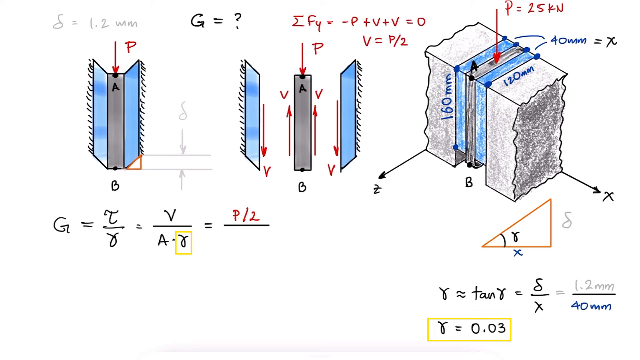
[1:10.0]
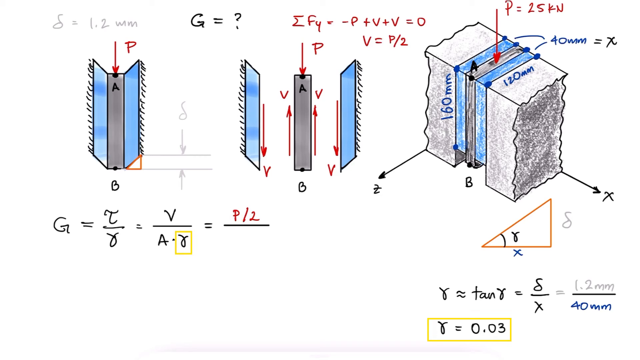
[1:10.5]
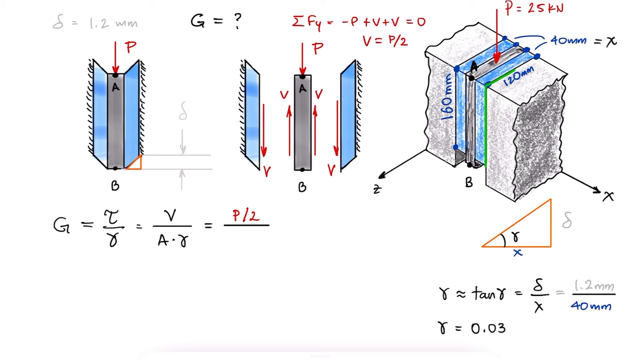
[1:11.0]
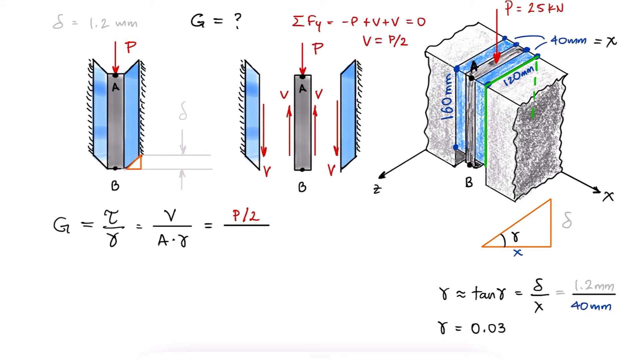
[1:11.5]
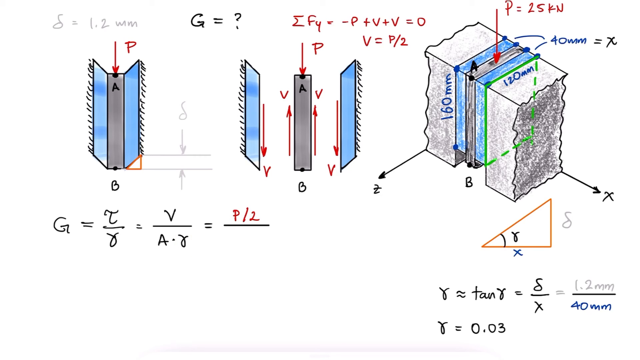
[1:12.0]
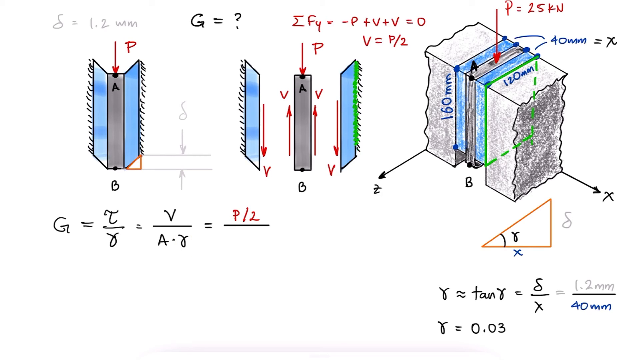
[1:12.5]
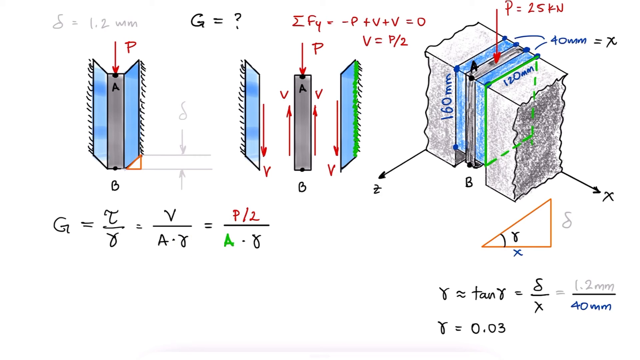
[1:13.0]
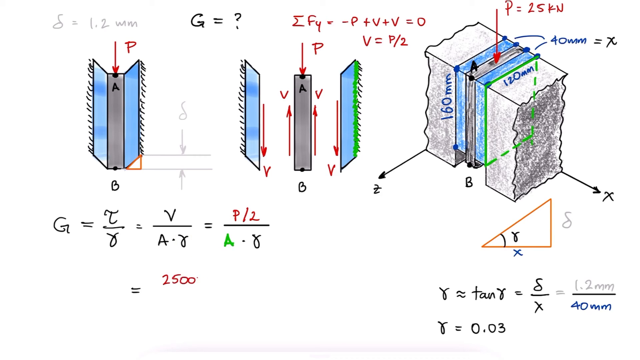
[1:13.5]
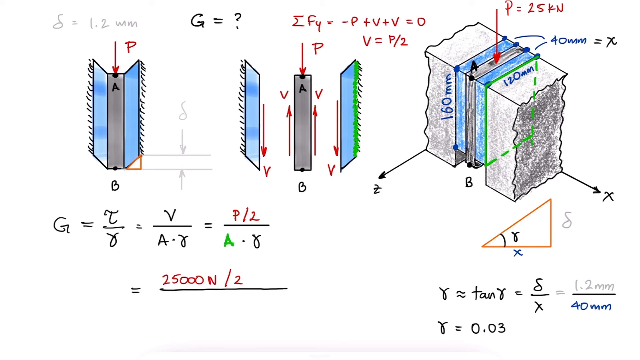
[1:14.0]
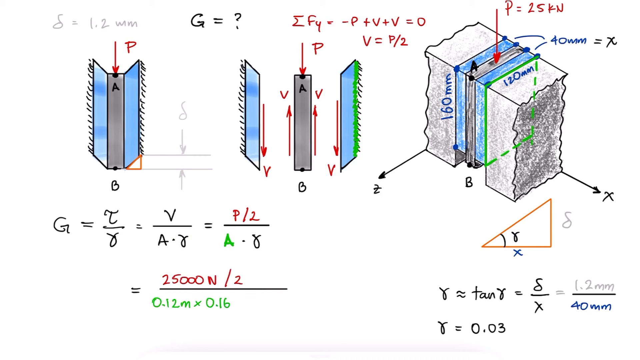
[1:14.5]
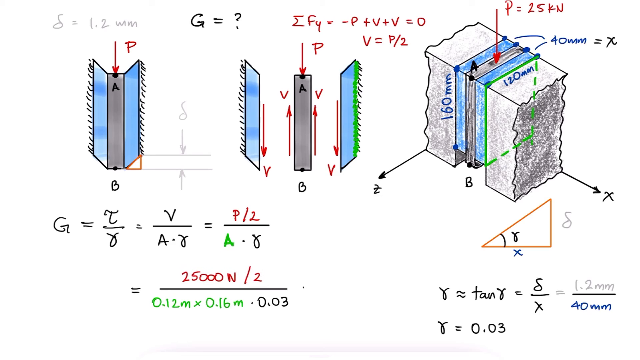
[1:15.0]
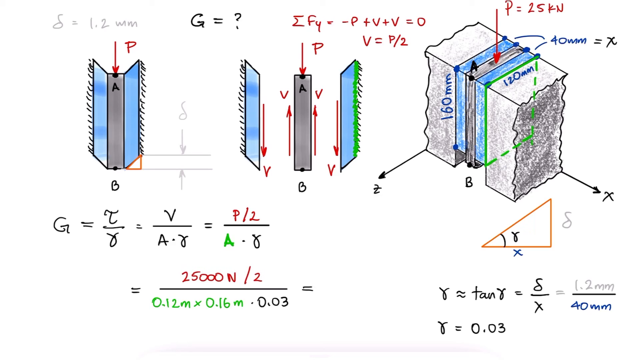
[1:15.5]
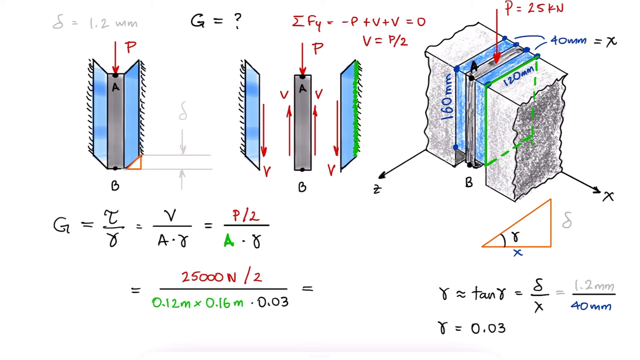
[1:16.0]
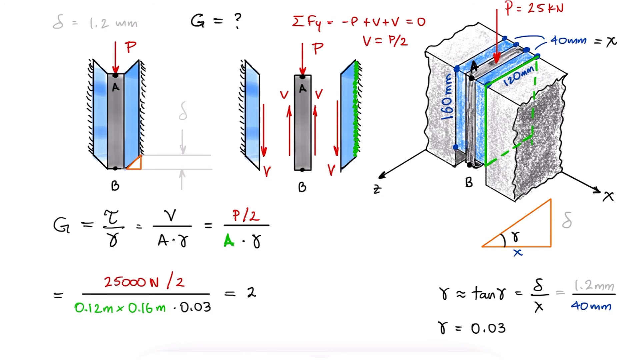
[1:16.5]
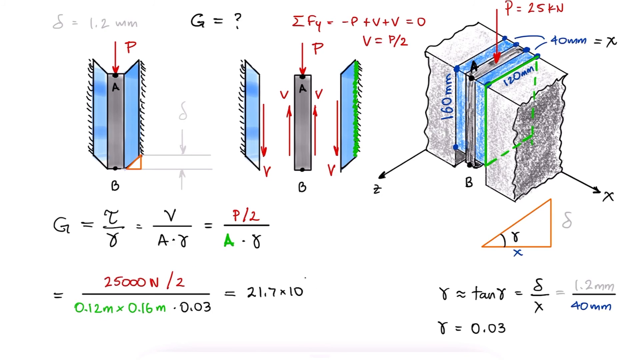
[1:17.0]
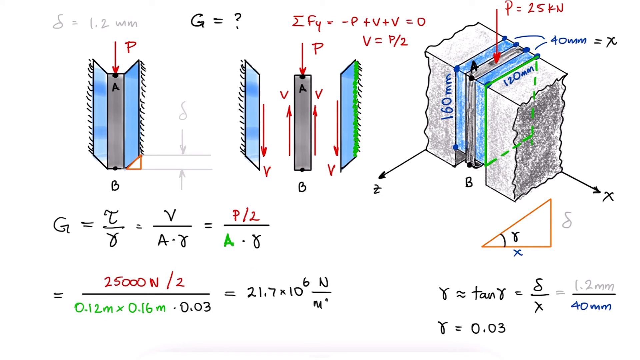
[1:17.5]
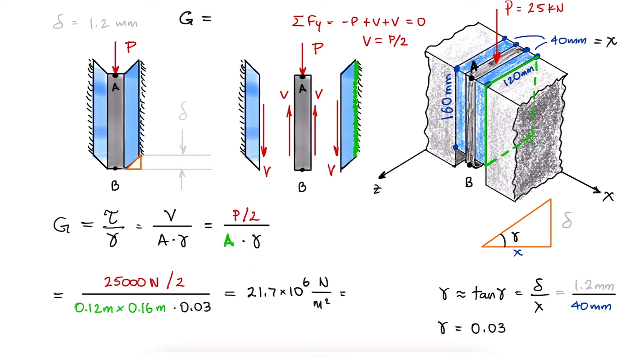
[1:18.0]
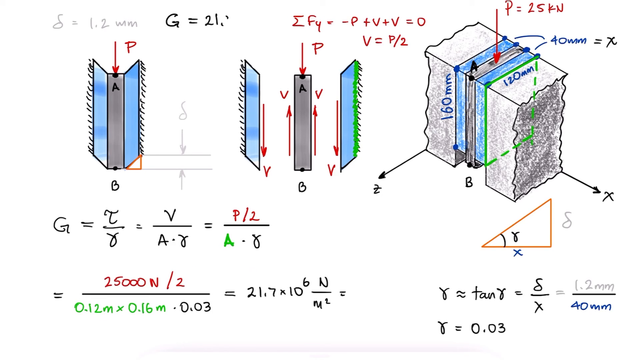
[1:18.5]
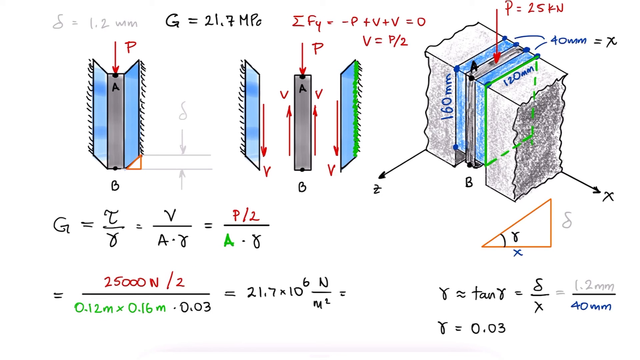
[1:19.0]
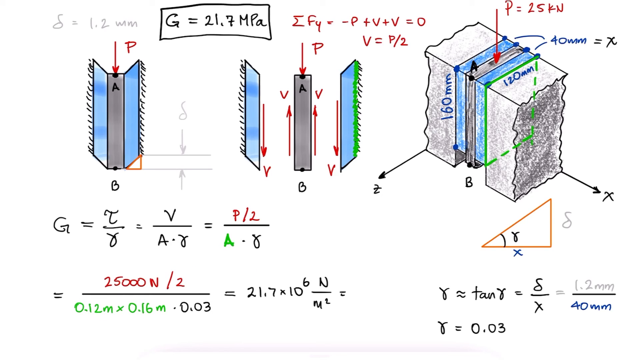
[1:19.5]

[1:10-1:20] Three sketches are shown, and the first sketch, where B and A are found, is now broken into three parts. Above the sketch is a formula for finding the value of P, which is carried into the formula needed to find the value of G. Points on the first sketch are highlighted in green, and the view of that point is shown in the second sketch, which is broken into three parts. A calculation is written: 2500 N over 2 over 0.12 meters times 0.16 meters times 0.02 equals 27.1 times 10 to the power of 6 N per square meter, which equals G.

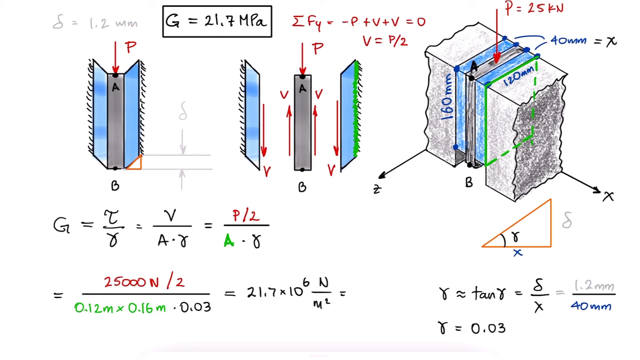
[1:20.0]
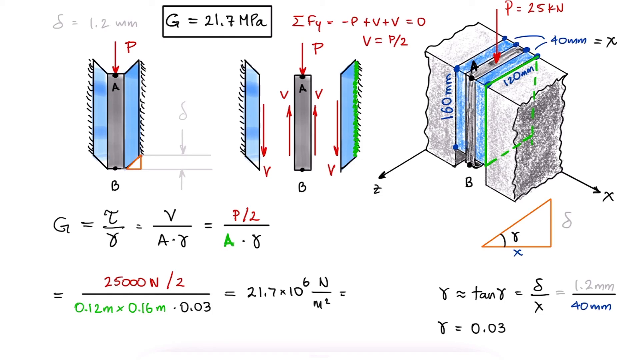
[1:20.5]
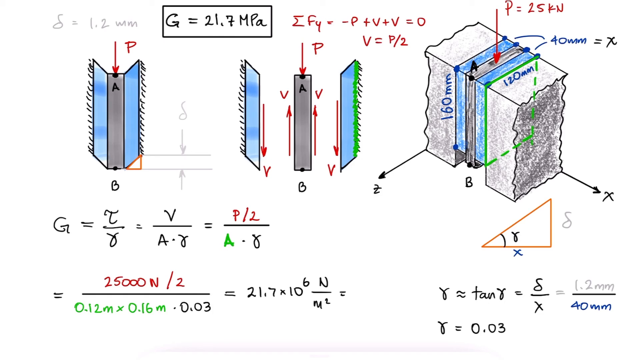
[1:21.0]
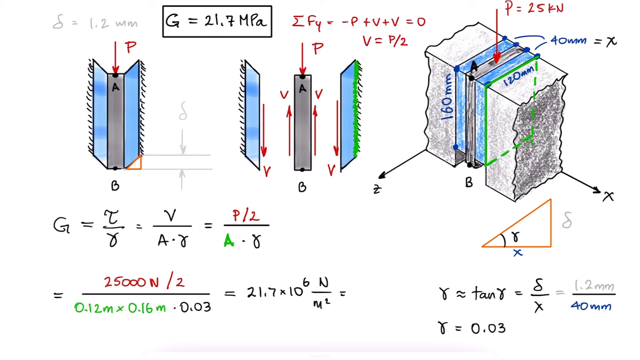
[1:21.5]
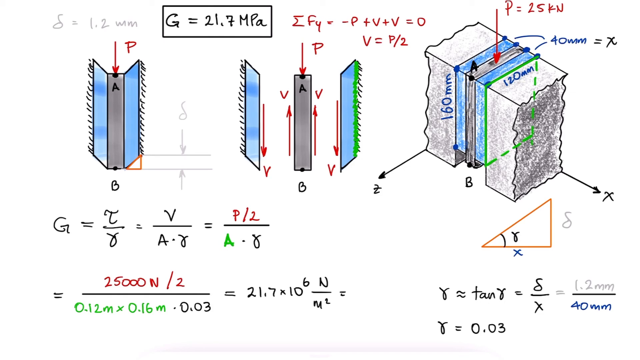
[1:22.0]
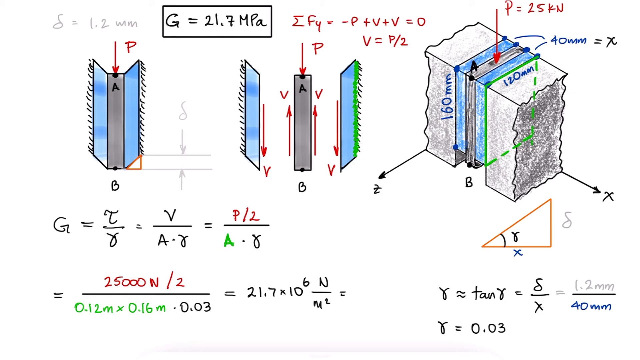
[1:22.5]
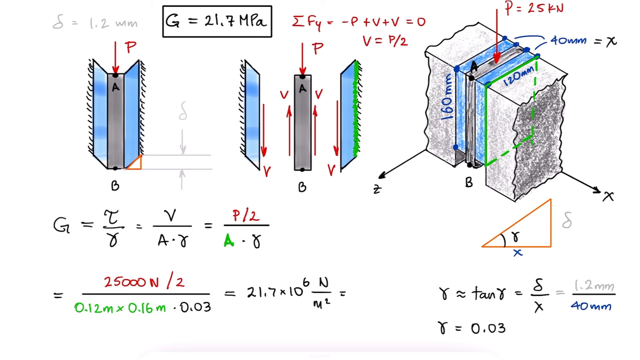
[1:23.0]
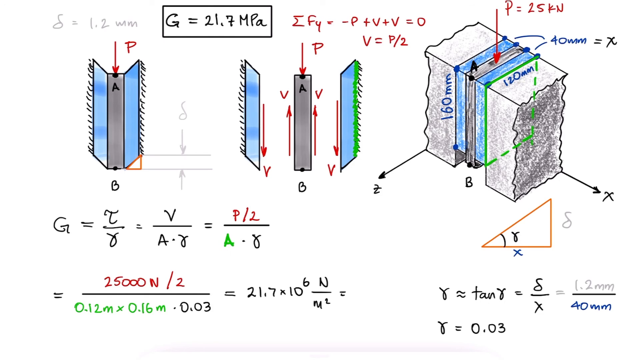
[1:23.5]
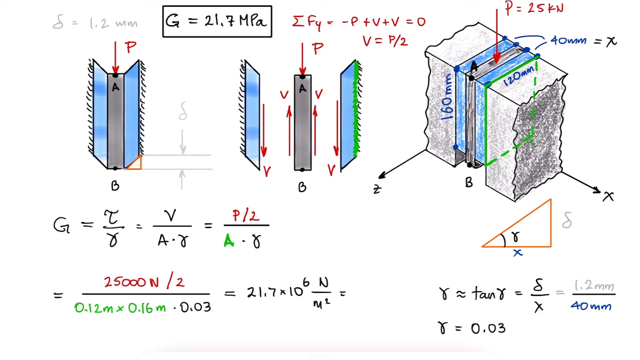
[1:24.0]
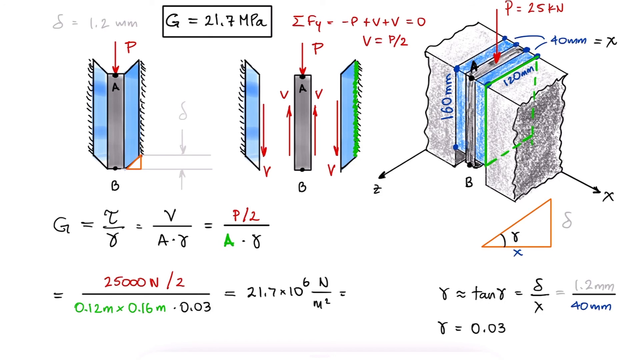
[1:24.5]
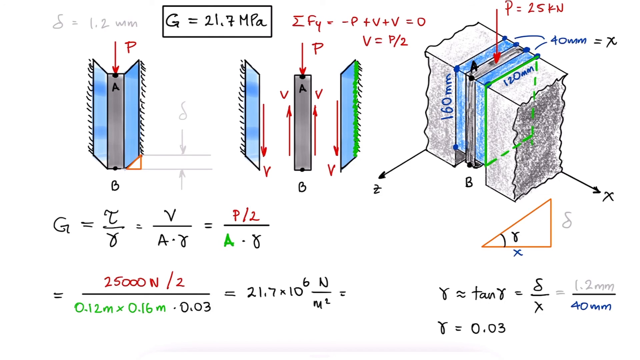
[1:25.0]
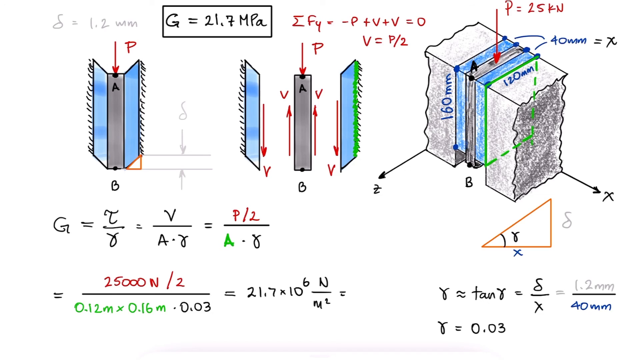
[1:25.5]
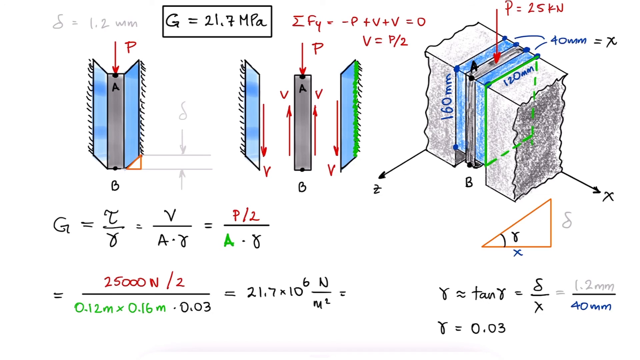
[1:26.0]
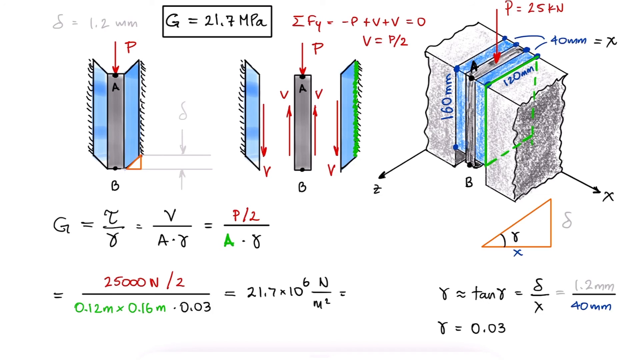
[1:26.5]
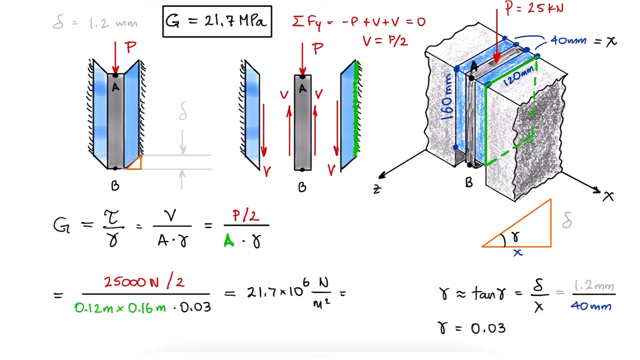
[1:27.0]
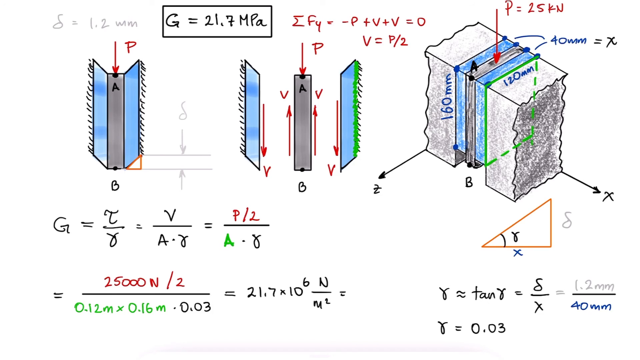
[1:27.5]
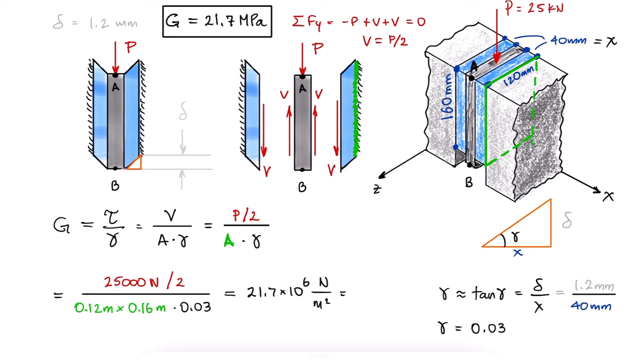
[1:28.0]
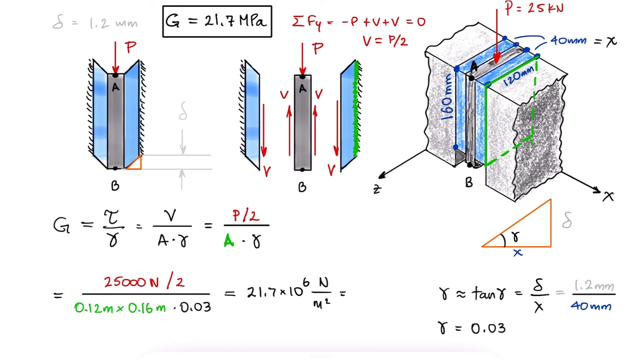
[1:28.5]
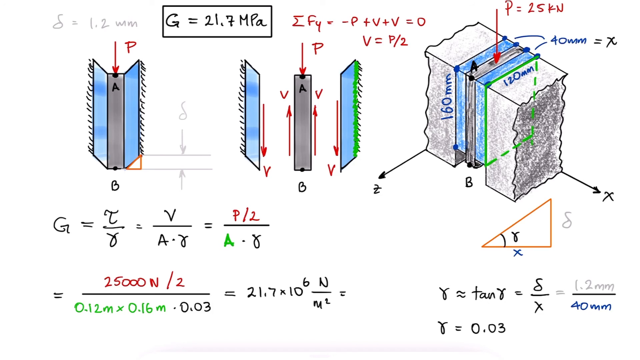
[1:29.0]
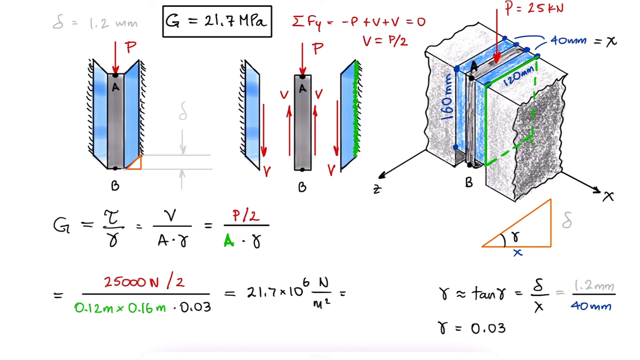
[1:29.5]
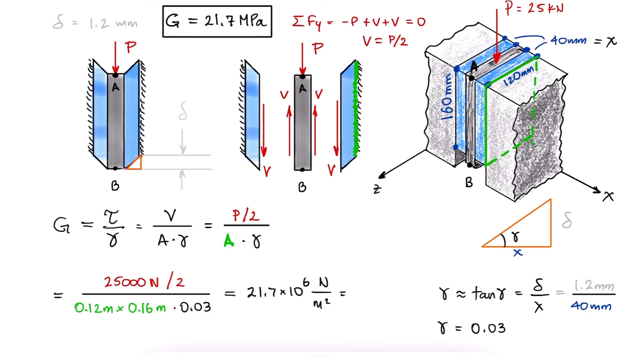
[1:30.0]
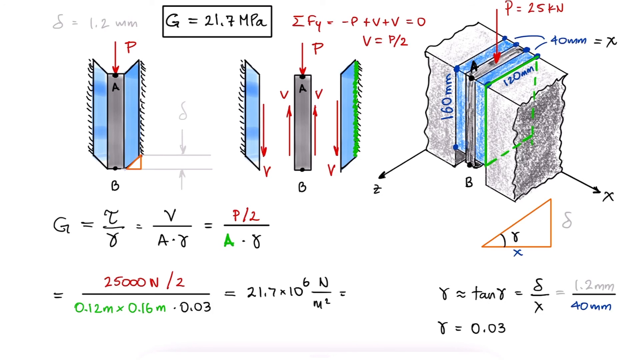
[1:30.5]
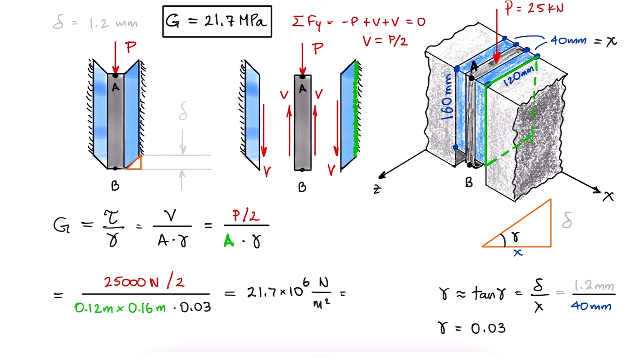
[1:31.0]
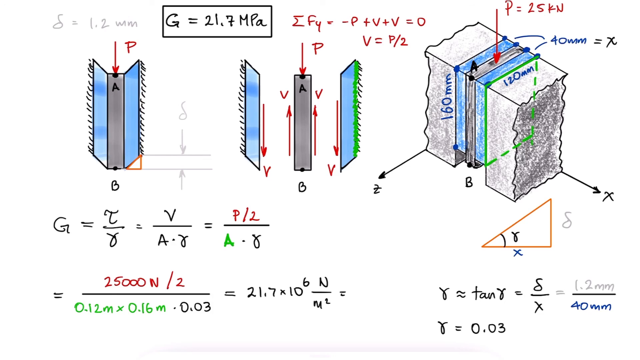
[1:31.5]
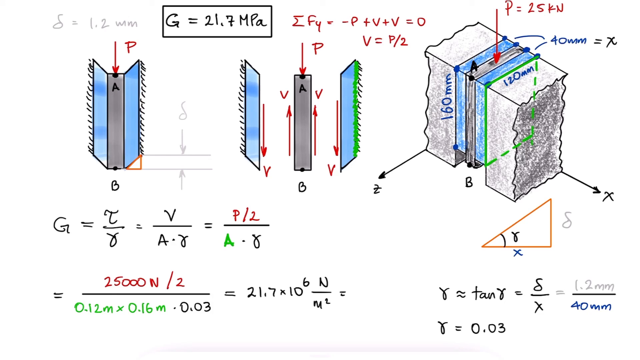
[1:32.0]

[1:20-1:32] The value of G is found to be 21.7 MPa, calculated with a formula involving P over 2 and the symbol, using values including 0,12 meters and 0,02. The solution is written as 21.7 times 10 to the power of 6, equal to 21.7 MPa.